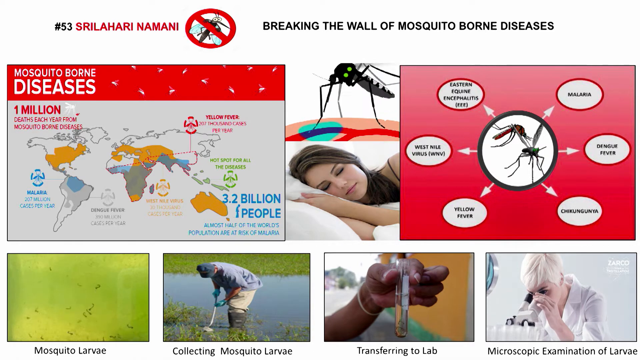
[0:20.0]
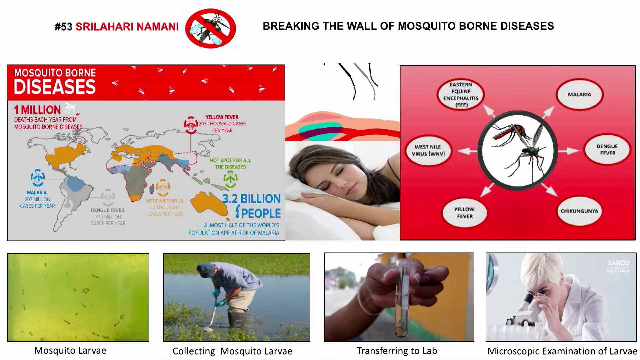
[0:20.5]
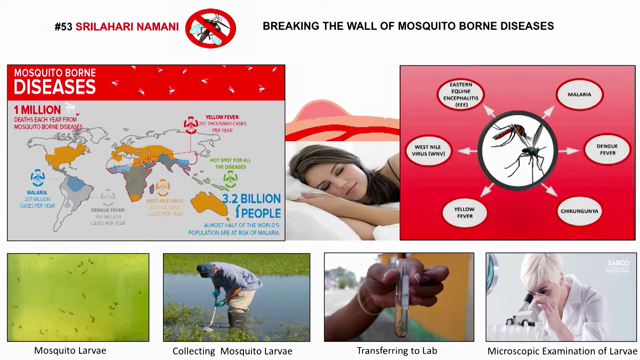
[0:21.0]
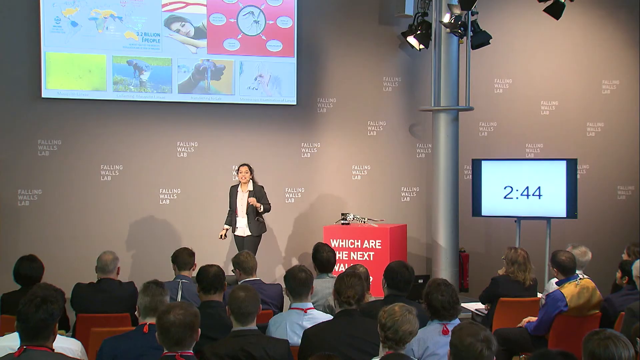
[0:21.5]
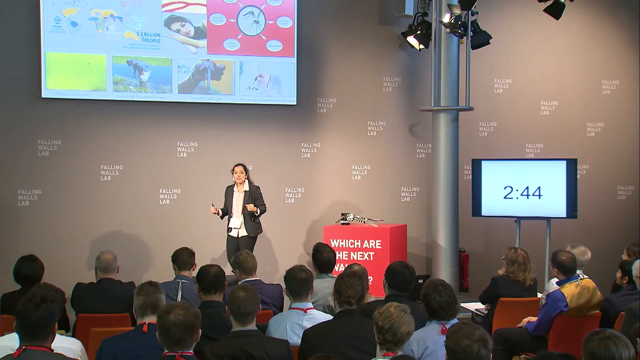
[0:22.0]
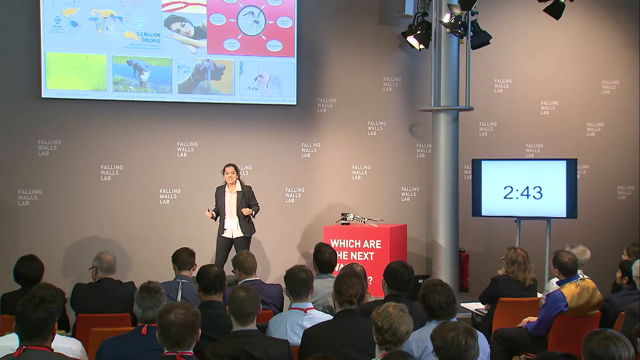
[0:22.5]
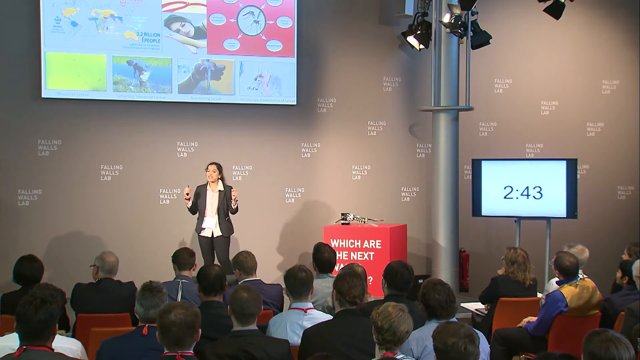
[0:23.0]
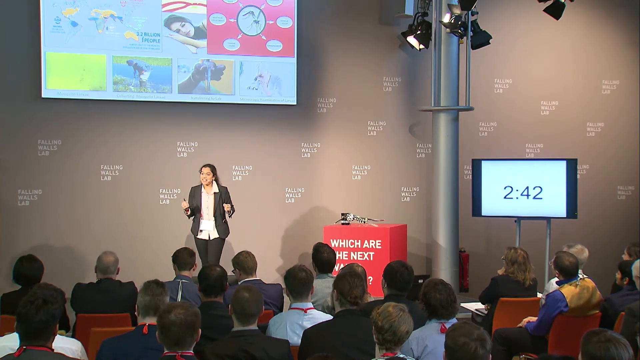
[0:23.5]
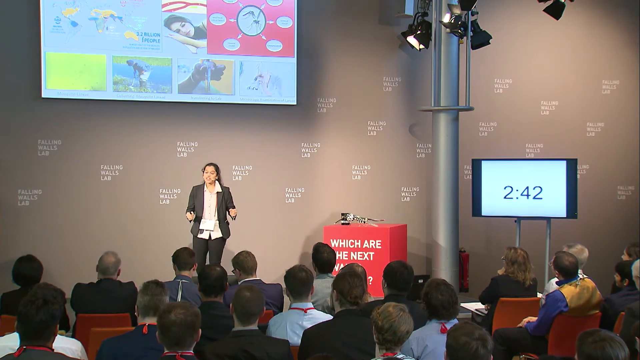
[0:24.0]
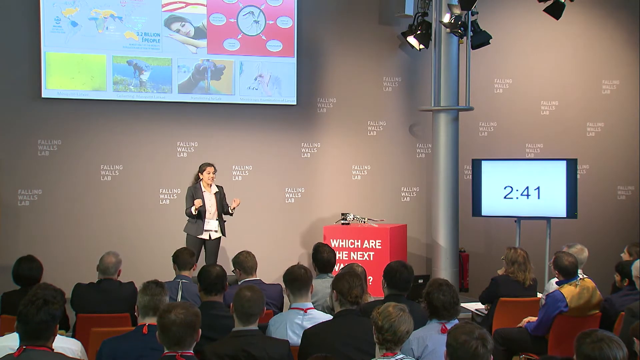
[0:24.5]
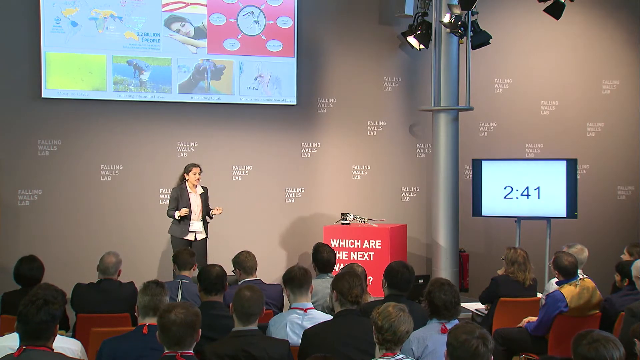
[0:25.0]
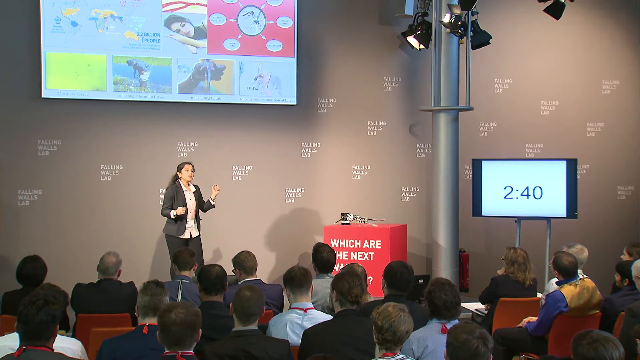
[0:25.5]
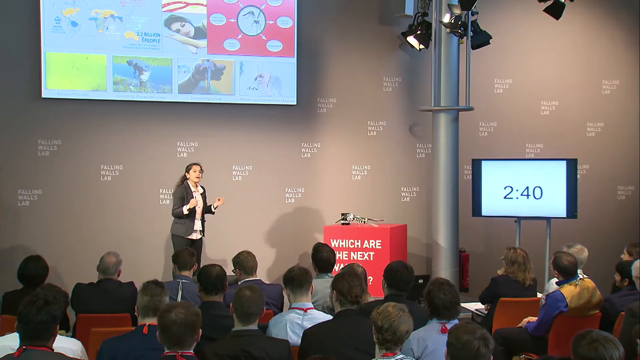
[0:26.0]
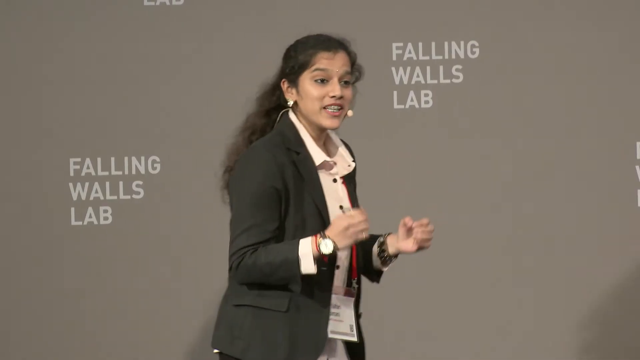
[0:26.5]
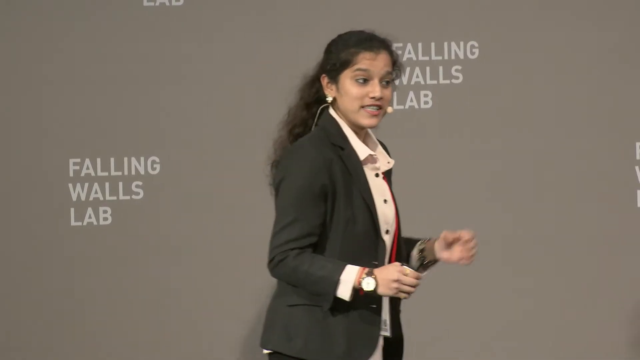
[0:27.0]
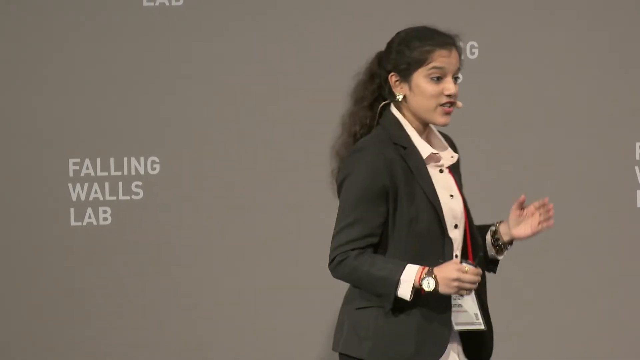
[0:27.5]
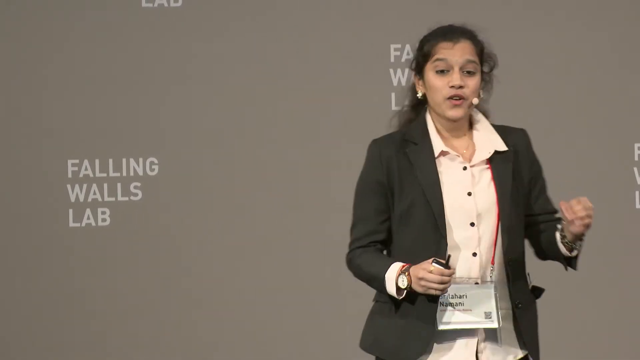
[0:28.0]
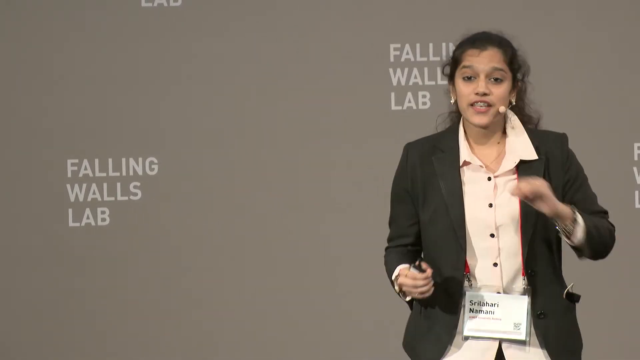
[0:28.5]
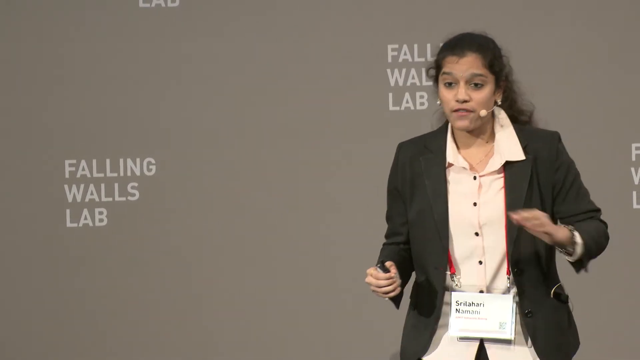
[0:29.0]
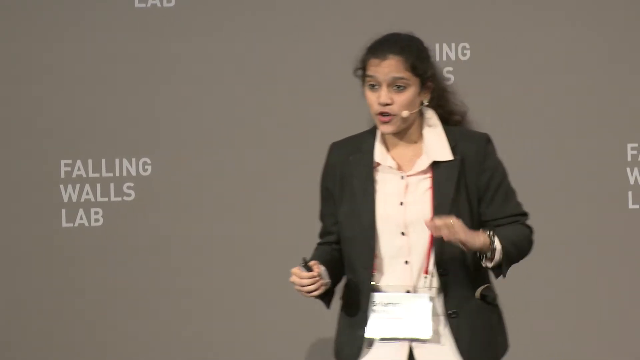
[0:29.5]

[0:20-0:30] Her presentation slide is enlarged to fill the whole screen and shows a lot about mosquitoes. At the very top, "#53" appears in black, followed by "Sri Lahari Namani" in red. To the right of that is an illustration of a mosquito inside a red circle with a red line drawn through it. Further right, black all-caps letters on a small white background read "breaking the wall of mosquito borne diseases". Below that, in the middle of the top part of the image, a woman is sleeping in a white bed with white bedding. Above her is a very large mosquito illustration showing the mosquito sticking its mouth into the skin and going into the artery.